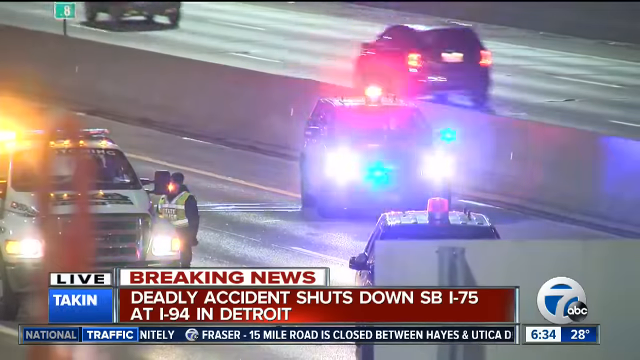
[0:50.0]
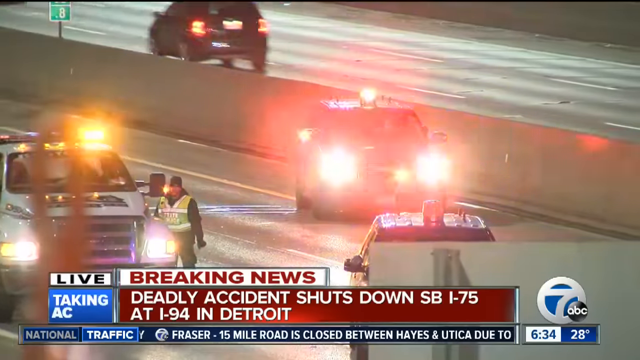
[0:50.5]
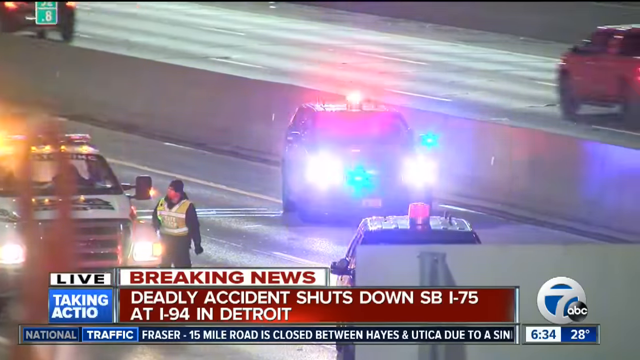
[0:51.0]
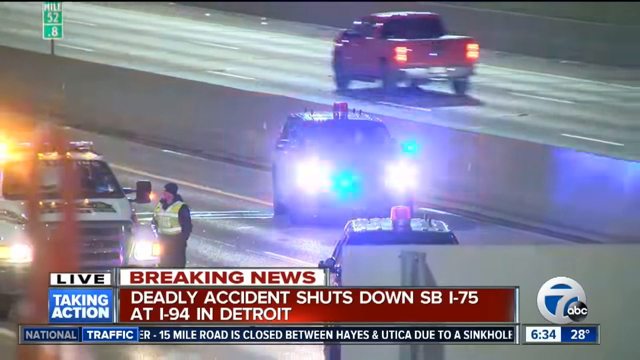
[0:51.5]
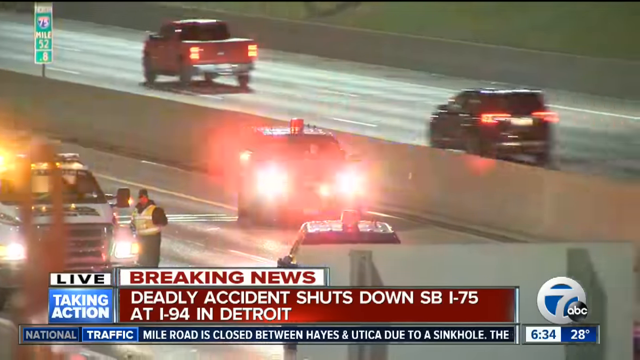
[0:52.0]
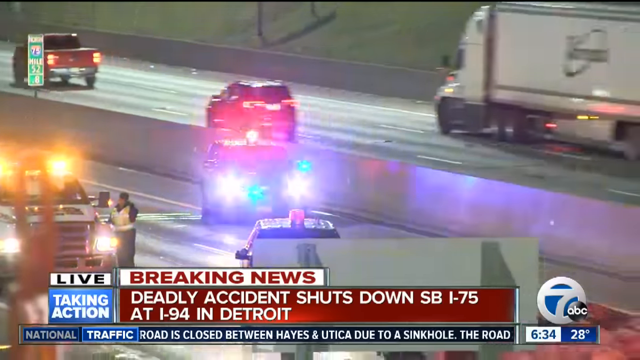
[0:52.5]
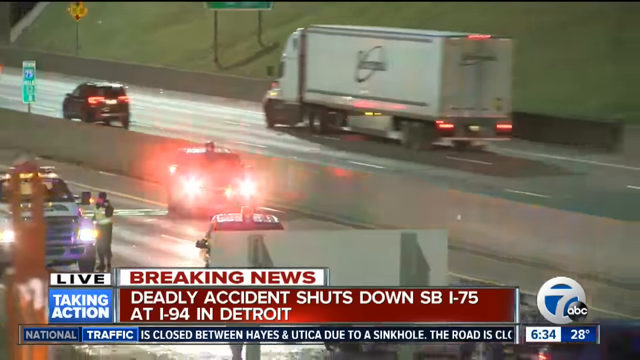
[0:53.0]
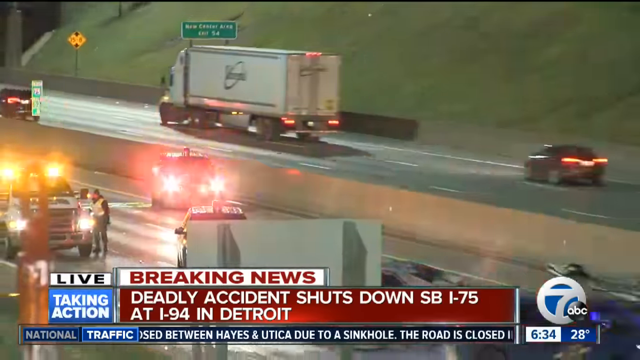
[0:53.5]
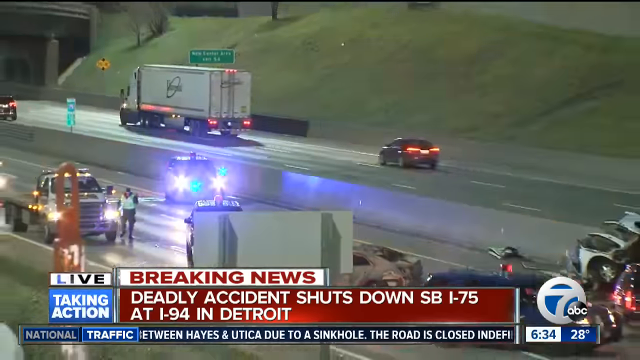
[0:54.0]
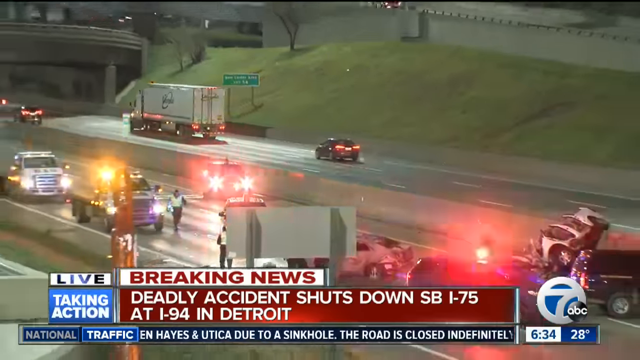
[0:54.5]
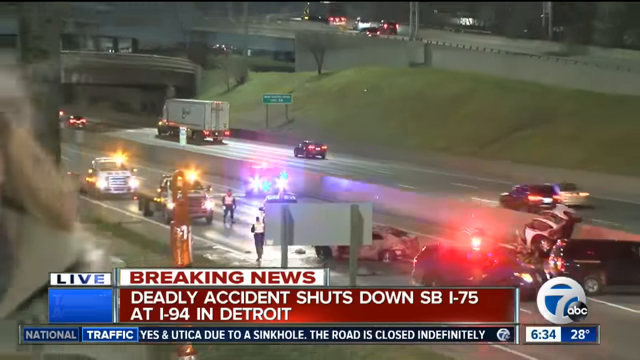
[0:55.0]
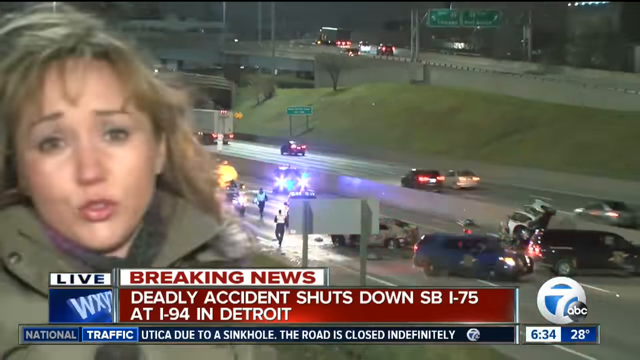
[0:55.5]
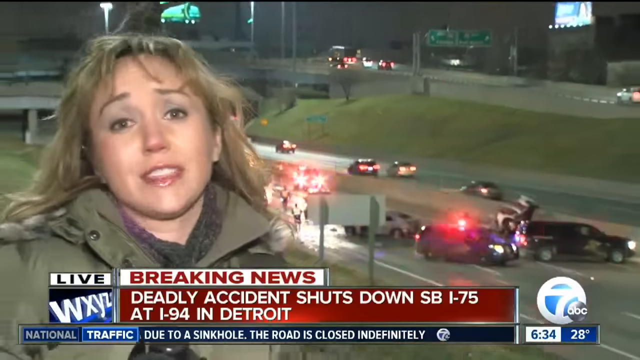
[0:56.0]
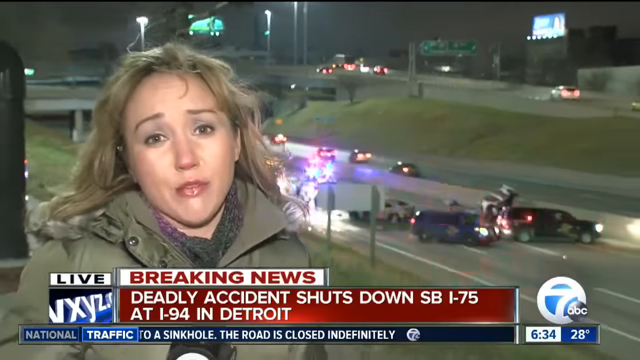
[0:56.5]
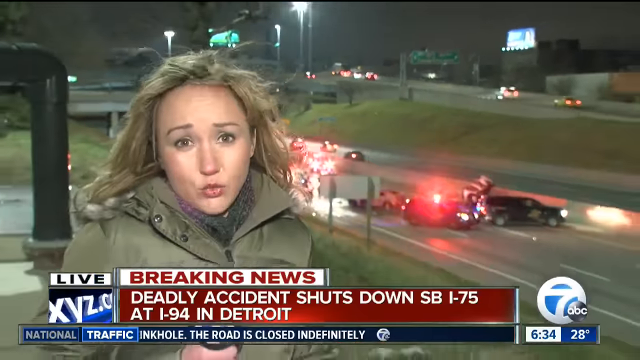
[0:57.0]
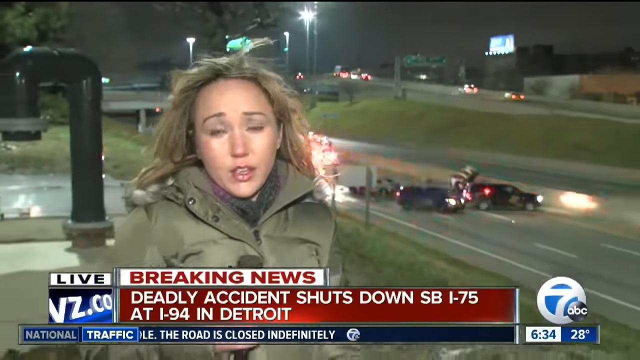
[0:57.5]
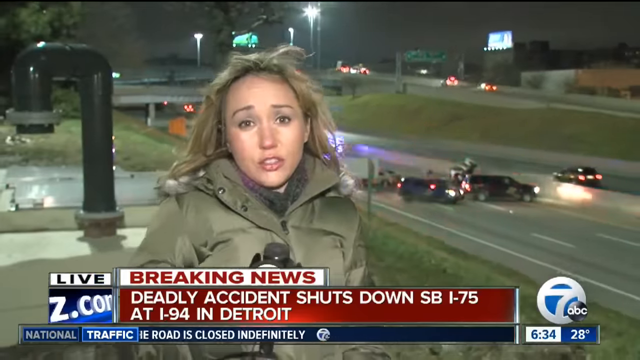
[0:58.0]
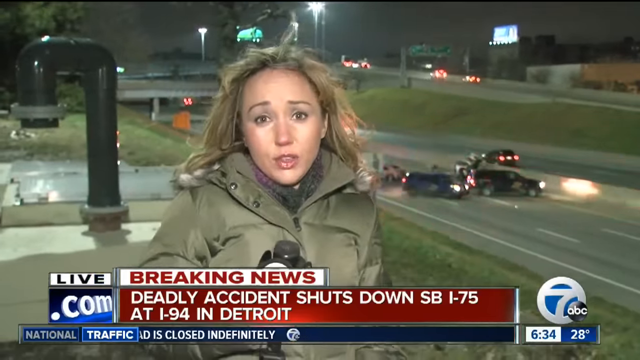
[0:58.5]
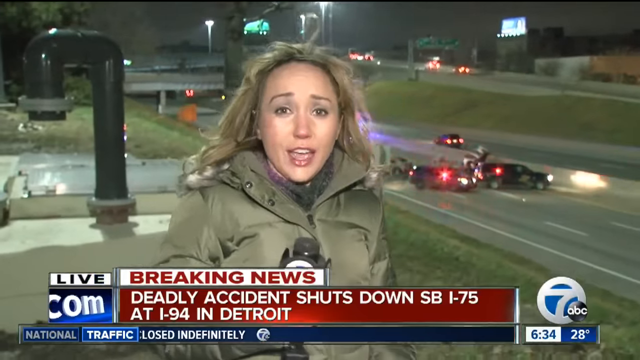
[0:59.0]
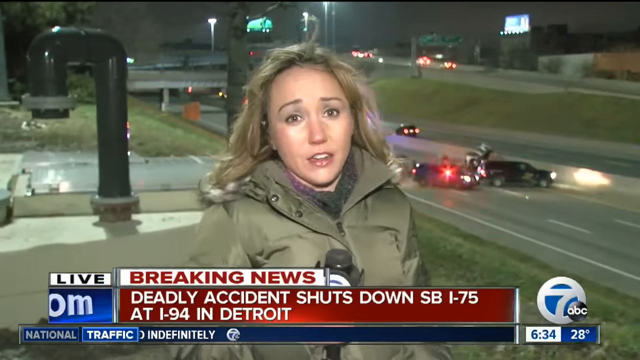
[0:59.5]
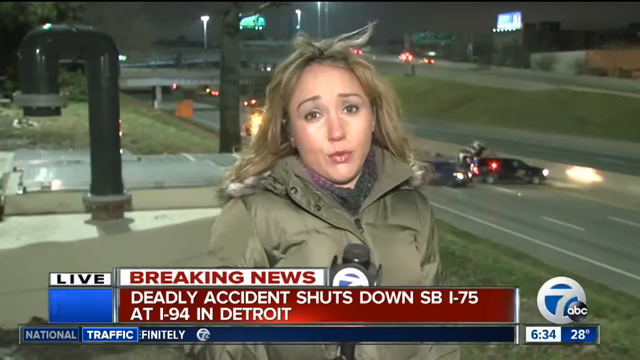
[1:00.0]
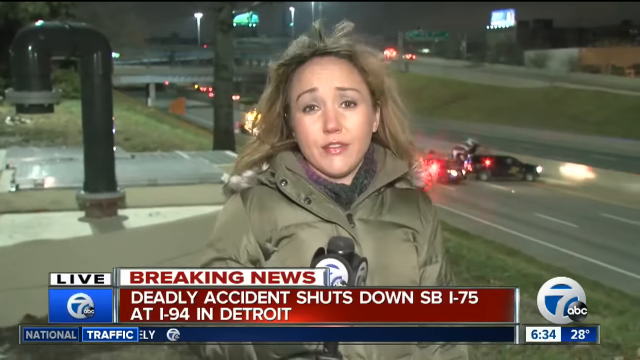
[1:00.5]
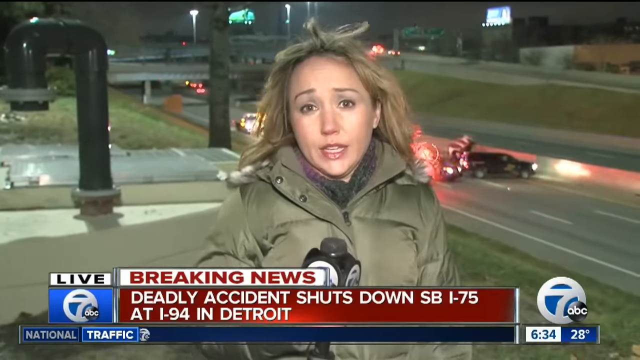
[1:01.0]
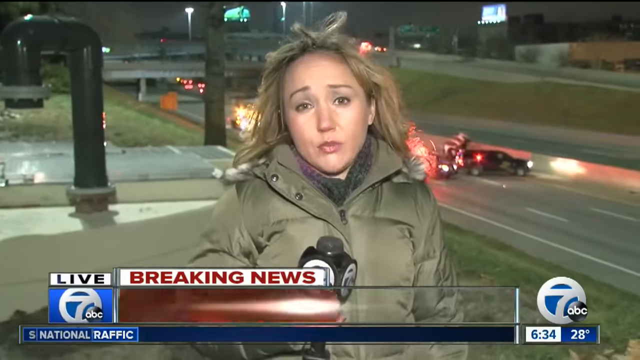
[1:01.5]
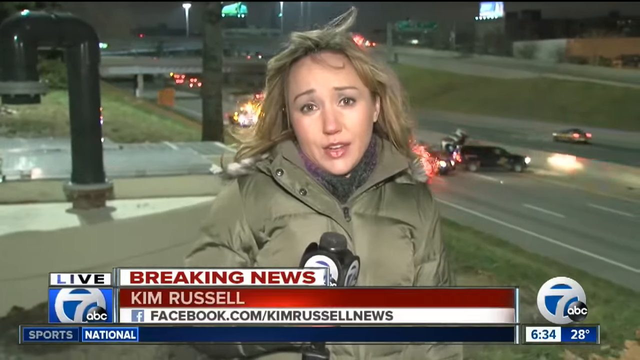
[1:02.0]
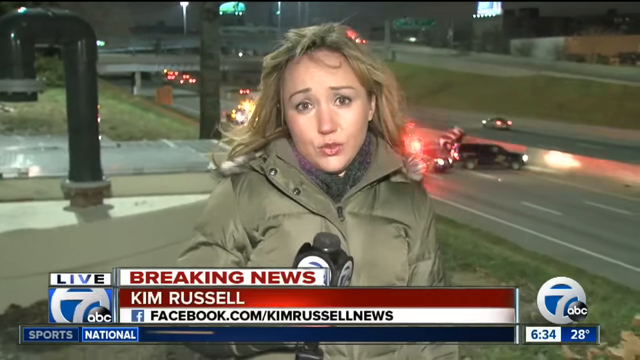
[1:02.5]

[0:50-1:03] The police arrive at the scene. Kim Russell keeps reporting, standing with the scene behind her, and sometimes moves aside so viewers can see what happened there.